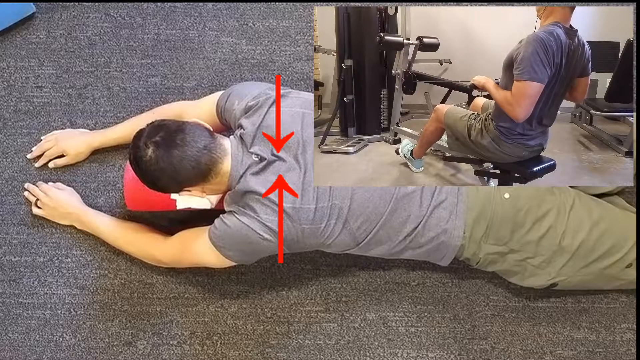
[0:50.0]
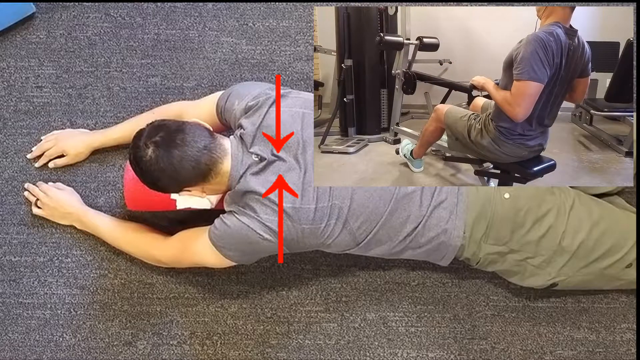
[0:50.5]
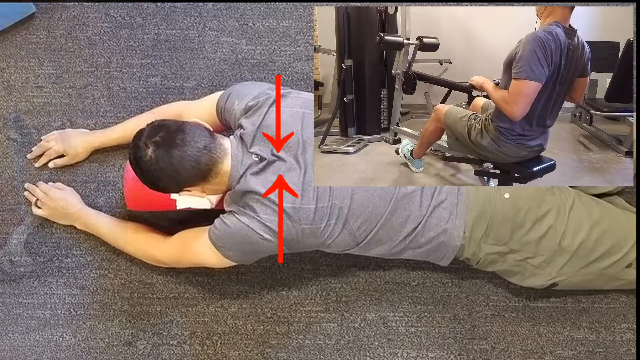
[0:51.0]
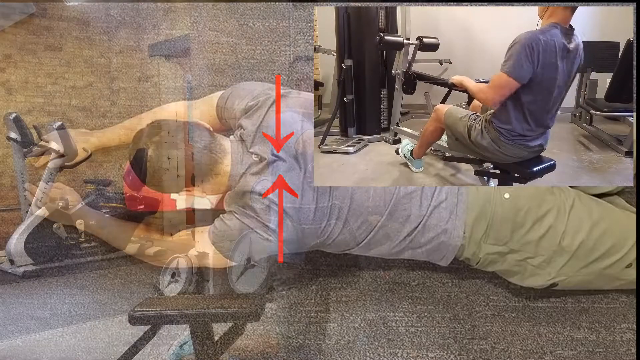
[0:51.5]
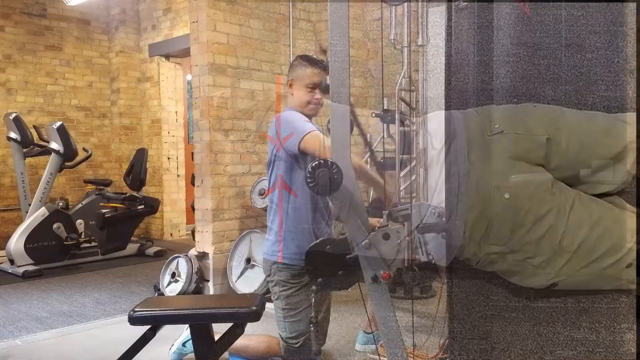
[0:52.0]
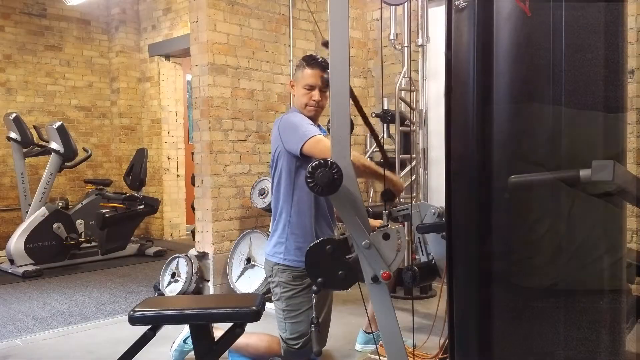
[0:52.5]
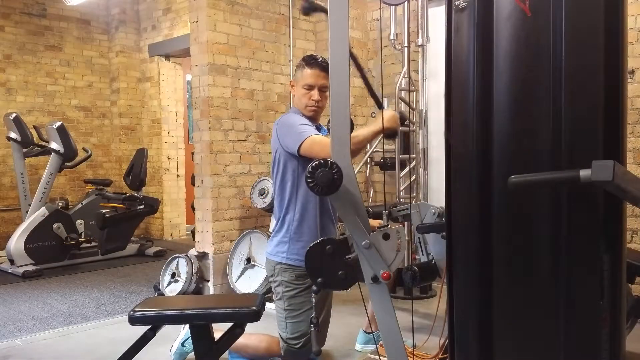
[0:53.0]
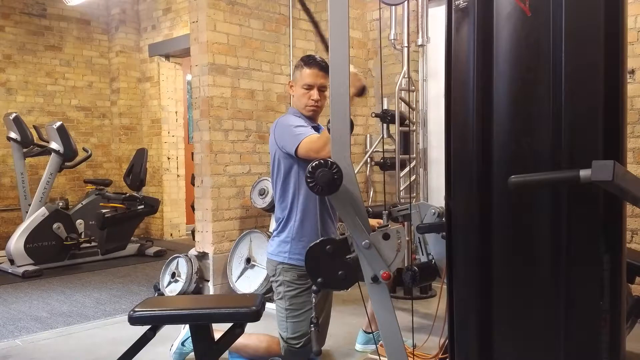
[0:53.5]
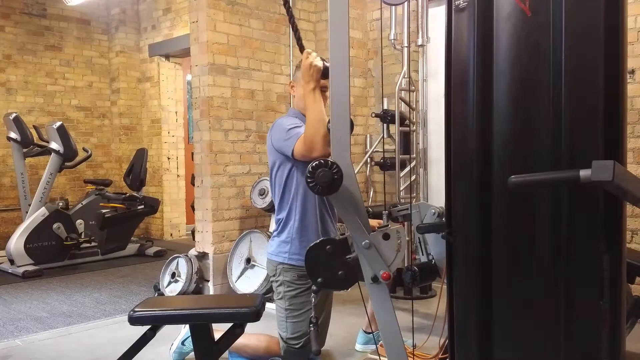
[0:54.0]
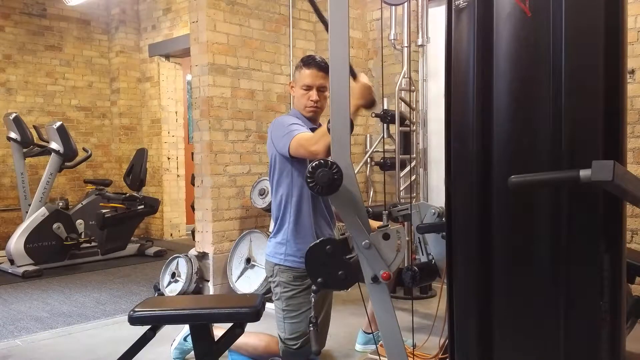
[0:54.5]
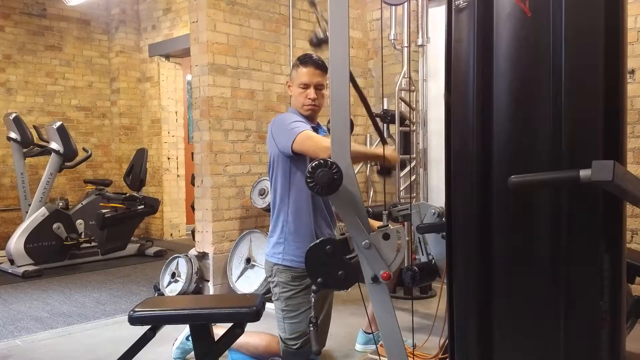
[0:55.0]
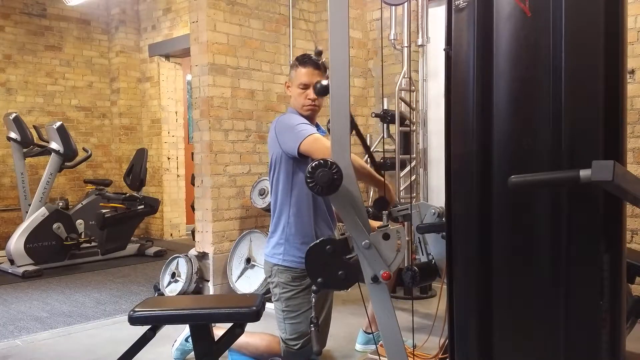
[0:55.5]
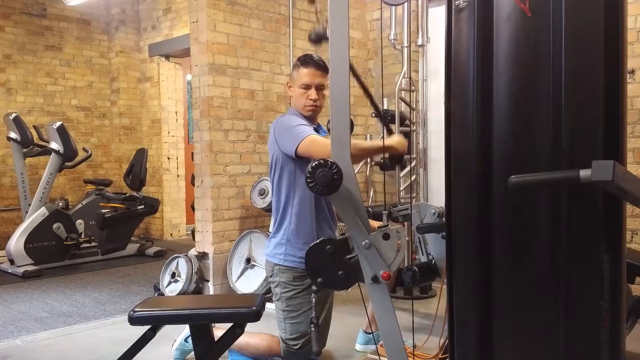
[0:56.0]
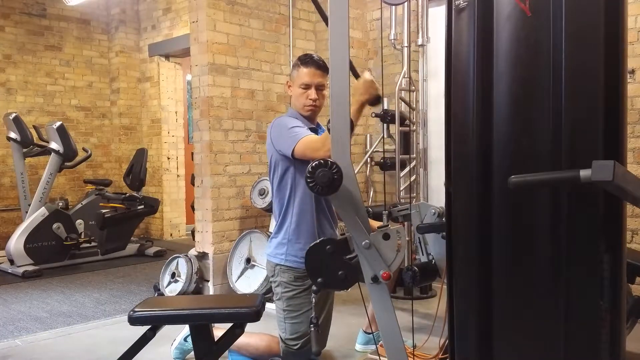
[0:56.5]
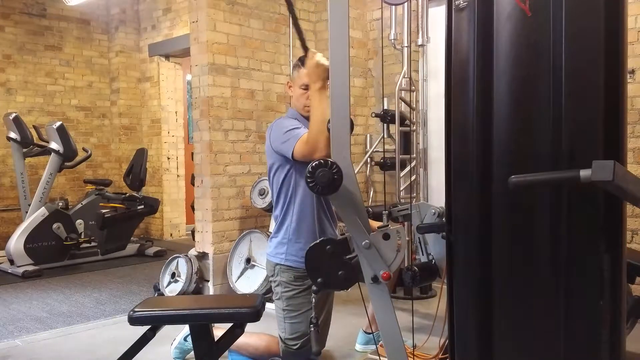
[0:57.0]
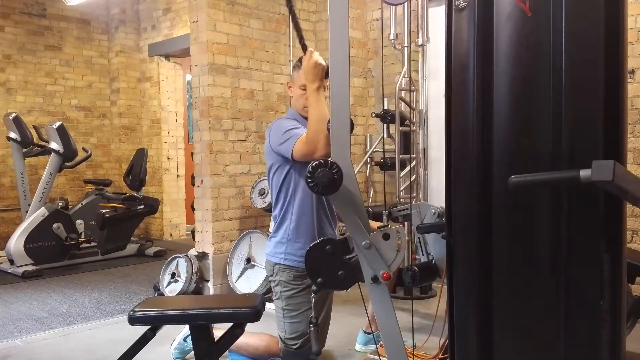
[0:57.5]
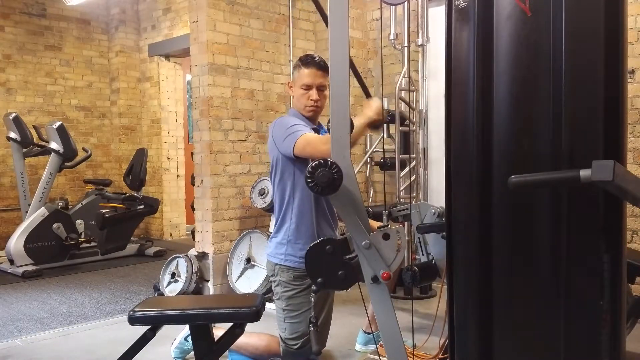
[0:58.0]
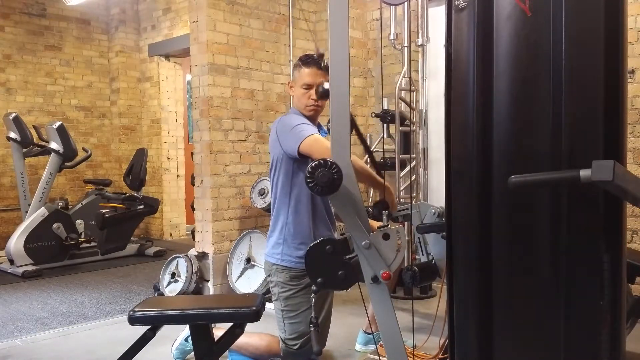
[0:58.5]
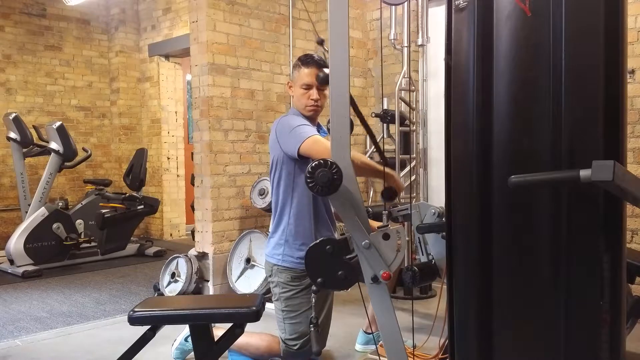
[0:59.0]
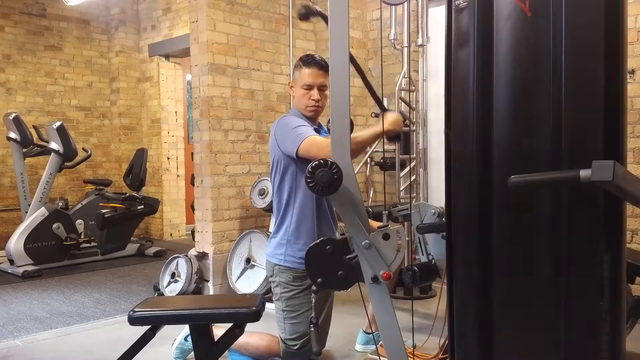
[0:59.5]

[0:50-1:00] The scene changes to a man in the middle doing an exercise. He holds a black rope with his right hand, his head turned to the right, looking down. He moves the rope away from his body, then the rope pulls upward and his arm moves upward with it as he releases. He repeats the motion, pulling the rope down with his arm extended away from his body, continuing to look down. On the right side, a rope acting like a pulley moves up and down.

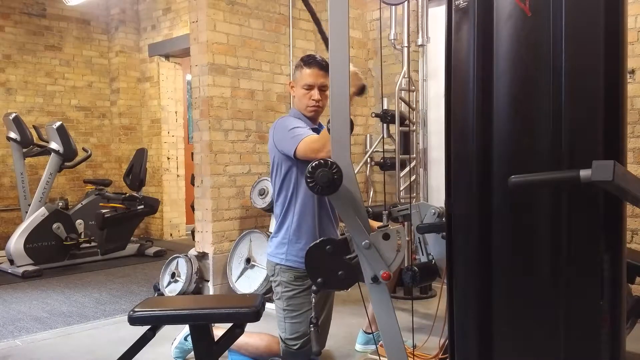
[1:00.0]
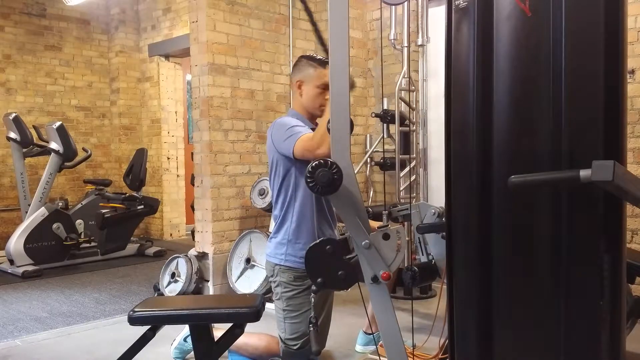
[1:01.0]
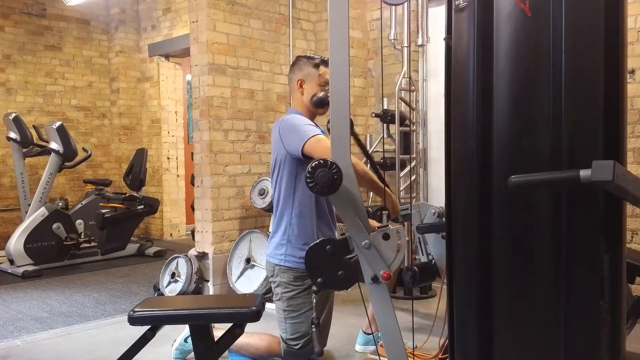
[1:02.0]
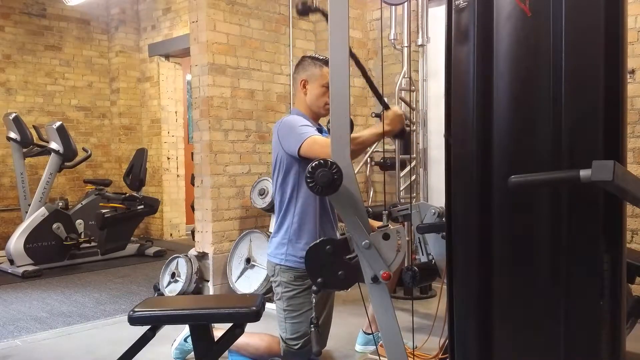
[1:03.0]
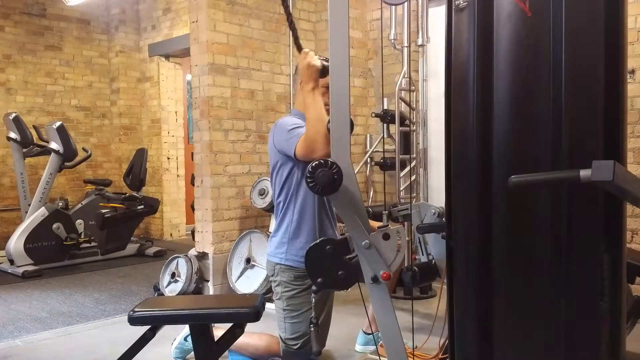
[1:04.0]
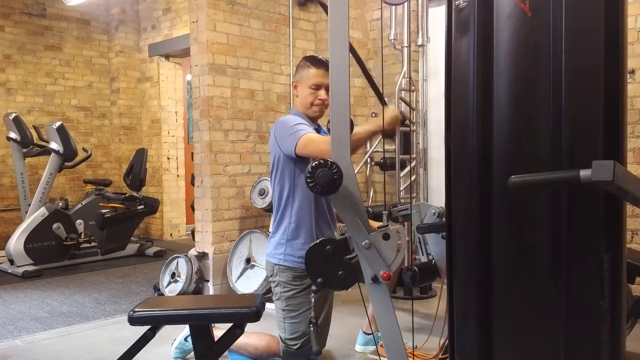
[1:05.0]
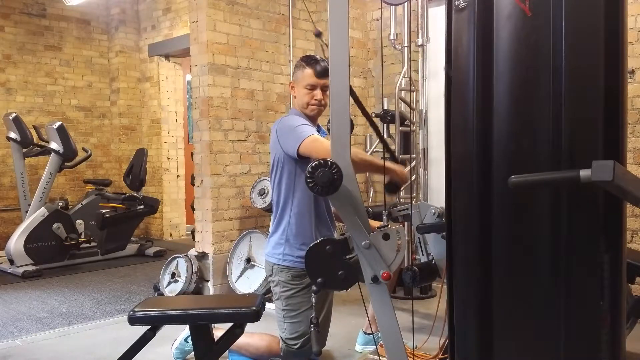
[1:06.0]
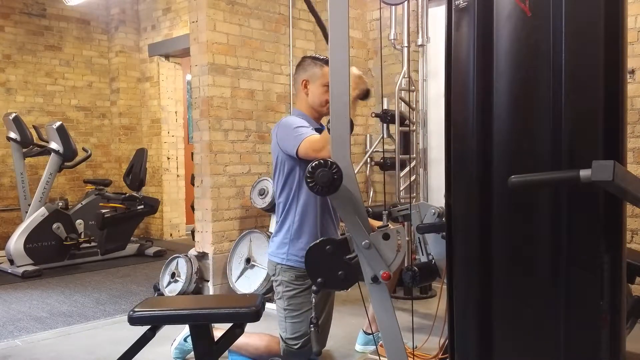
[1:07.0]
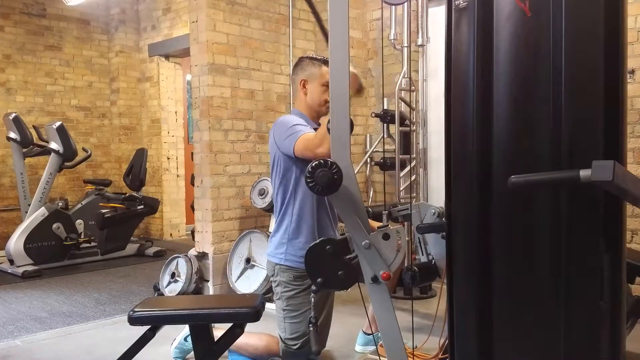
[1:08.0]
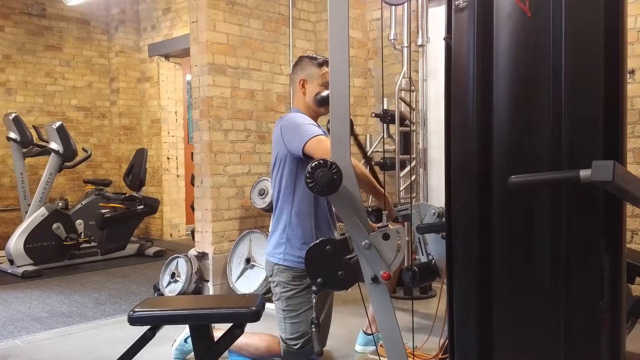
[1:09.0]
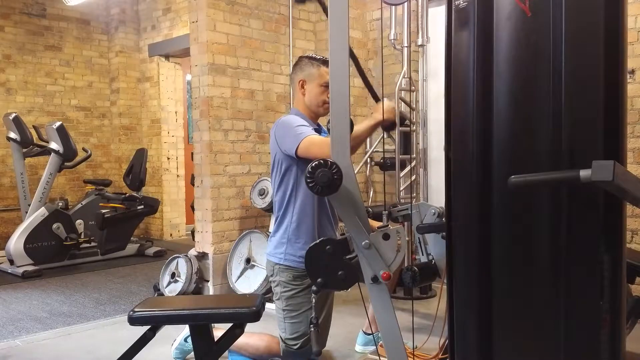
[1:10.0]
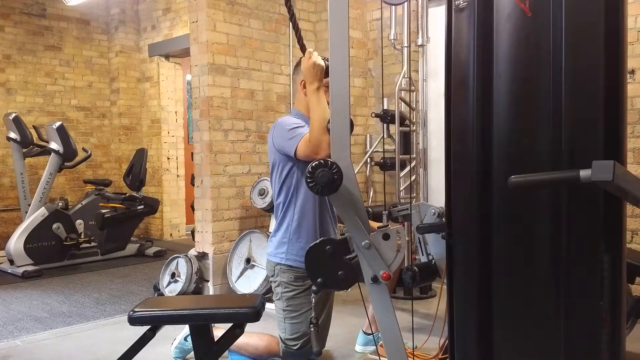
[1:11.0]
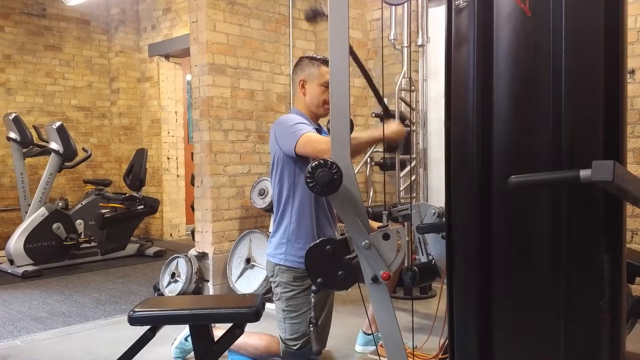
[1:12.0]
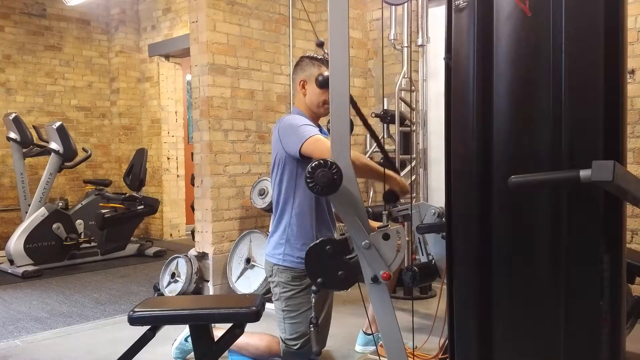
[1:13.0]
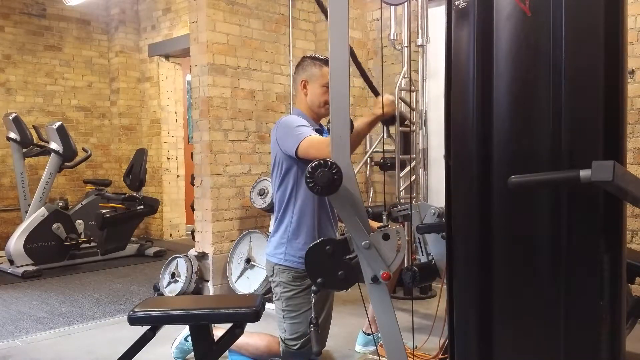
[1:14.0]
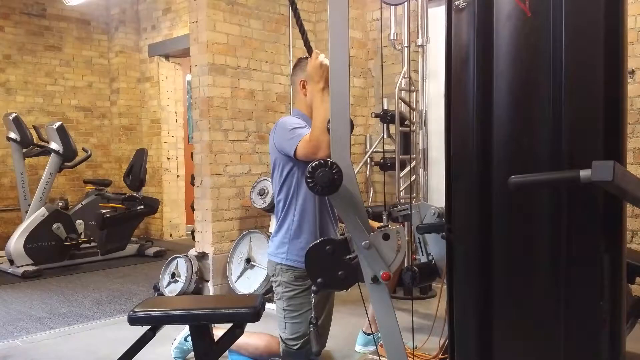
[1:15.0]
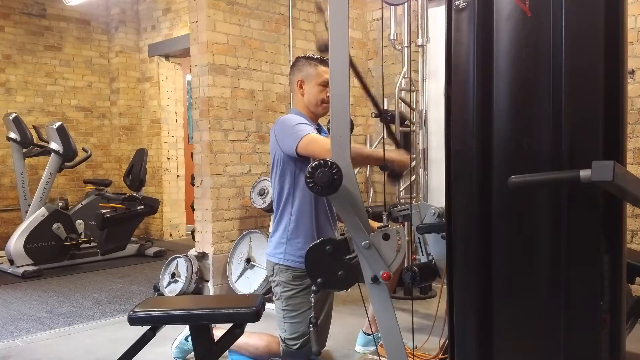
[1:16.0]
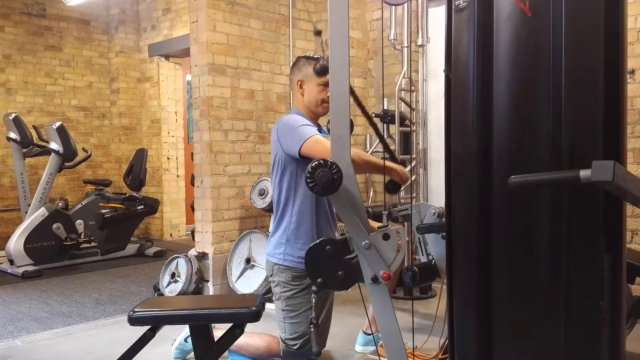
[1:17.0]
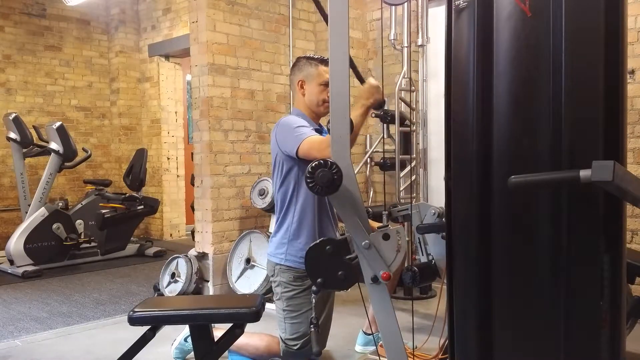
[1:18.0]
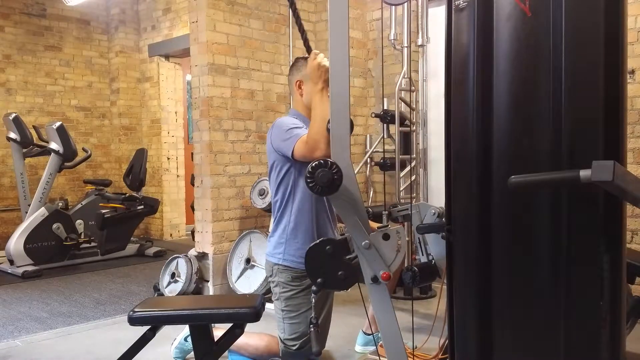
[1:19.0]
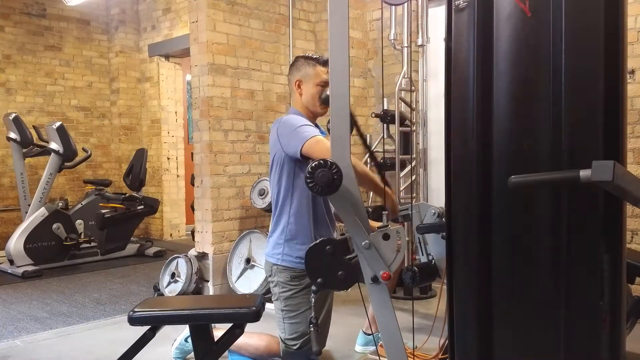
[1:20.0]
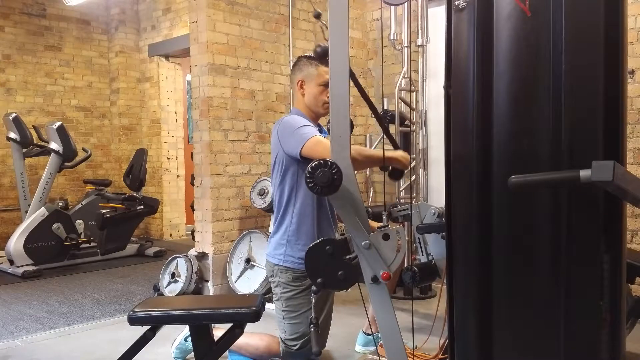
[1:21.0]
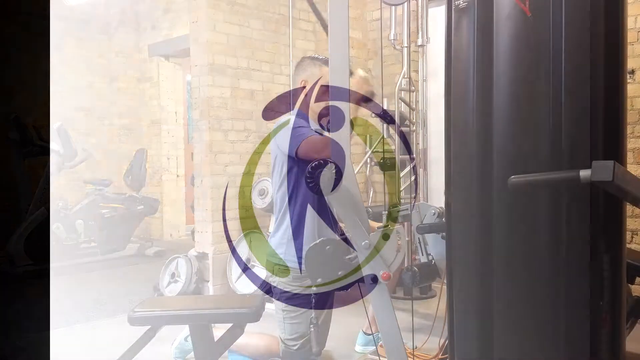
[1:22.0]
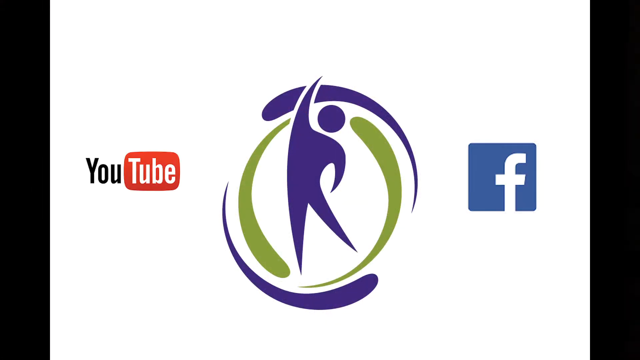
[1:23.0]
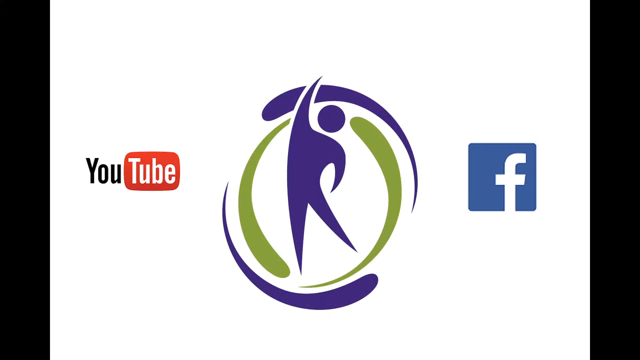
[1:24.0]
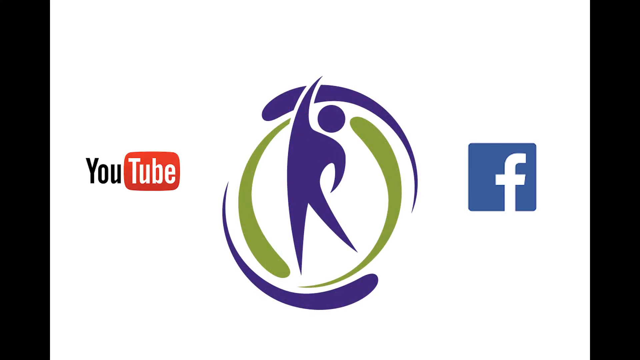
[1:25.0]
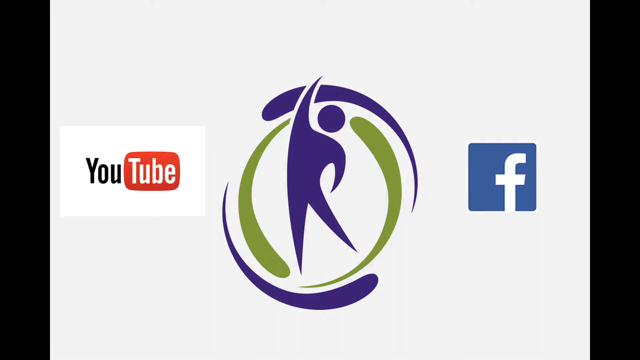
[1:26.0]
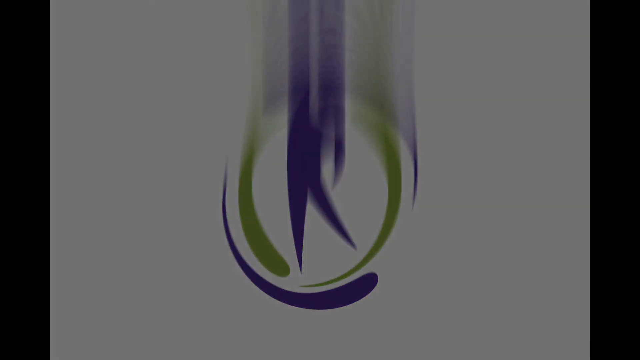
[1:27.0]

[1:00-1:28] The man continues the exercise, pulling the black rope down with his right hand, now looking forward to the right side. He wears a light blue shirt and what seem to be gray pants. Standing upright, he moves his right hand down with the arm extended away from his body while holding the rope; once the rope is extended he releases, the rope goes upward, and his hand goes up vertically toward it. The pulley of ropes on the right side moves. The exercise equipment on the right side is very large, black, vertical and looks very tall. Behind the man on the left side is a set of Olympic style weights, and in the left corner there is an elliptical machine. The scene then changes to the logo of the human character raising an arm in the air, with a YouTube symbol on the left and a Facebook symbol on the right.